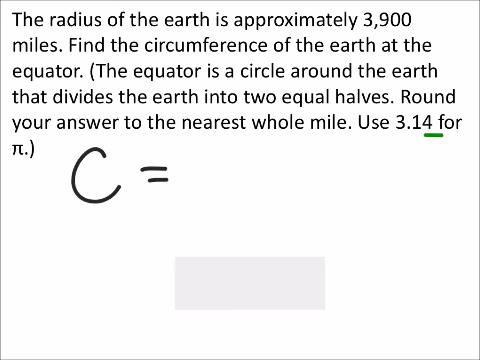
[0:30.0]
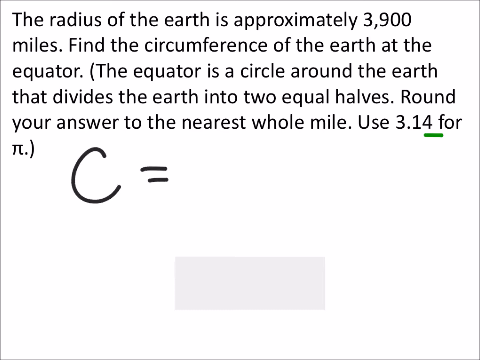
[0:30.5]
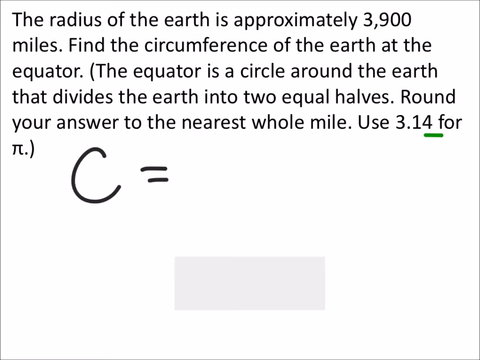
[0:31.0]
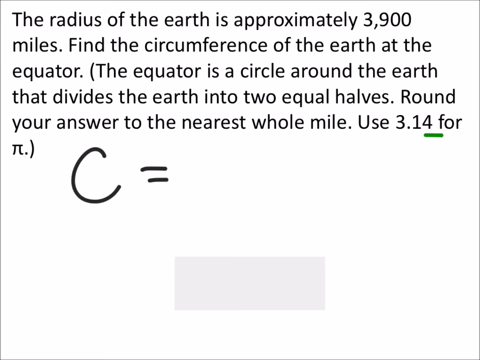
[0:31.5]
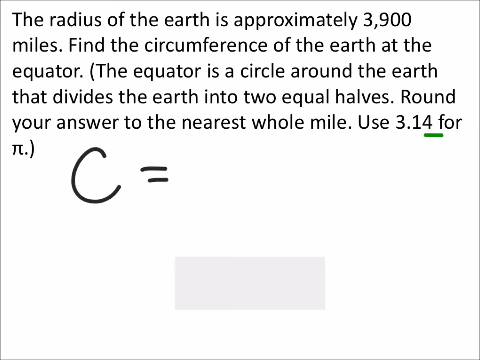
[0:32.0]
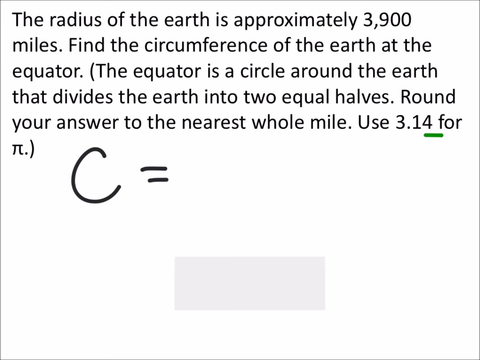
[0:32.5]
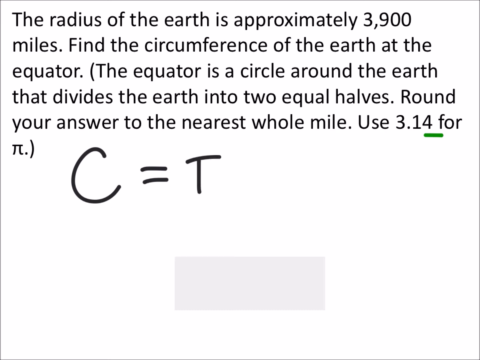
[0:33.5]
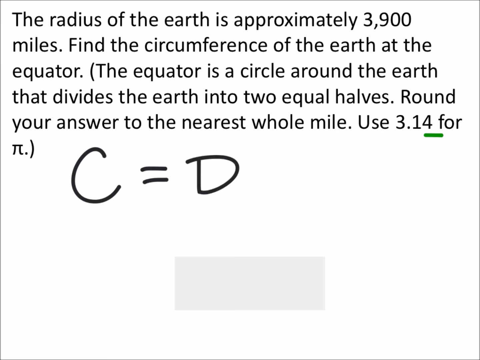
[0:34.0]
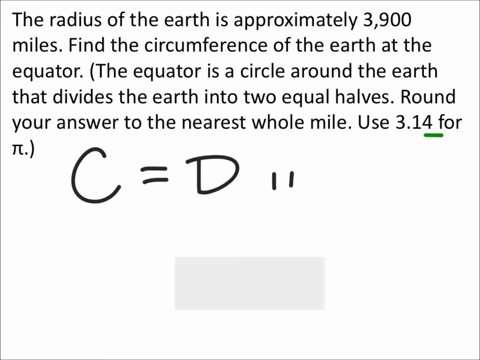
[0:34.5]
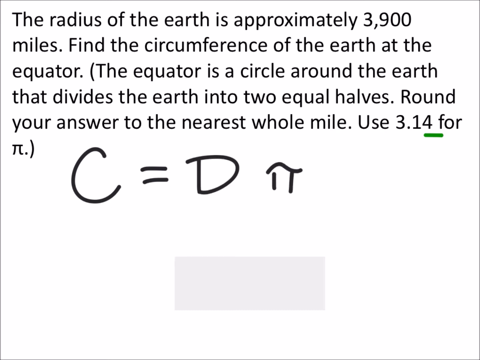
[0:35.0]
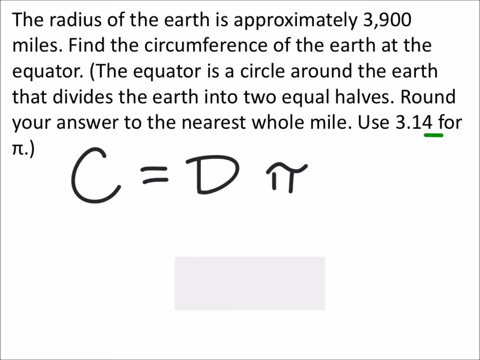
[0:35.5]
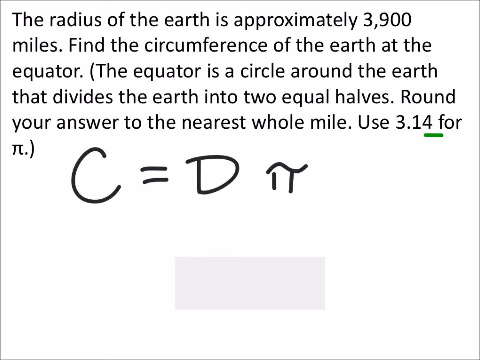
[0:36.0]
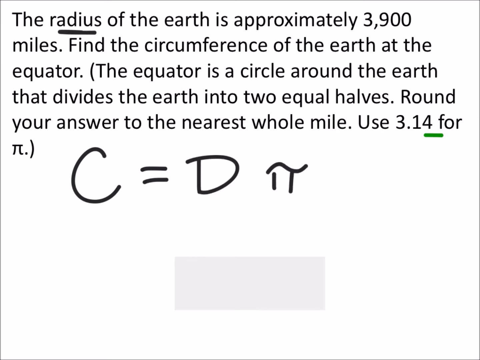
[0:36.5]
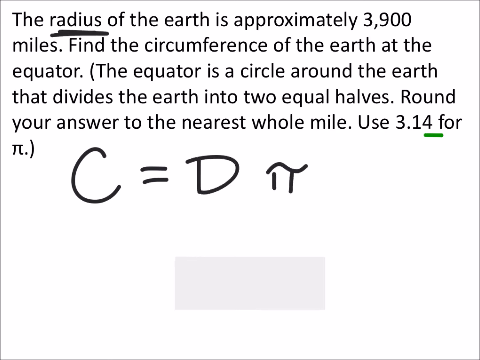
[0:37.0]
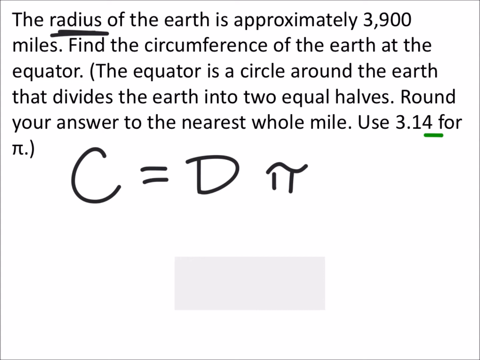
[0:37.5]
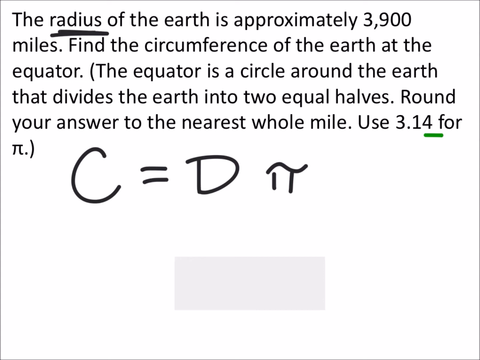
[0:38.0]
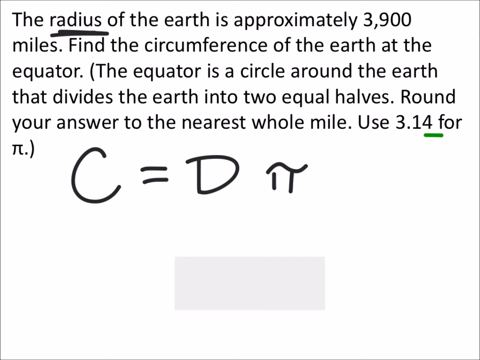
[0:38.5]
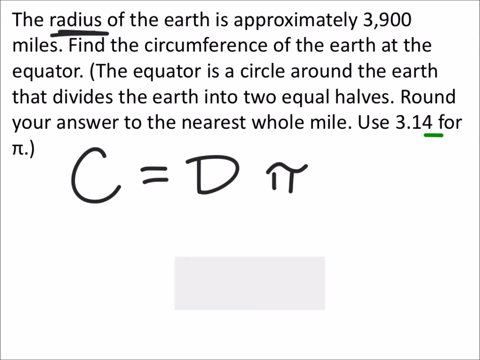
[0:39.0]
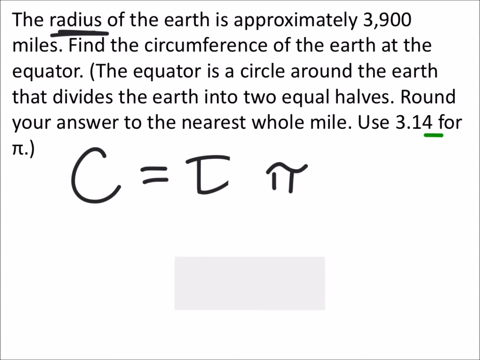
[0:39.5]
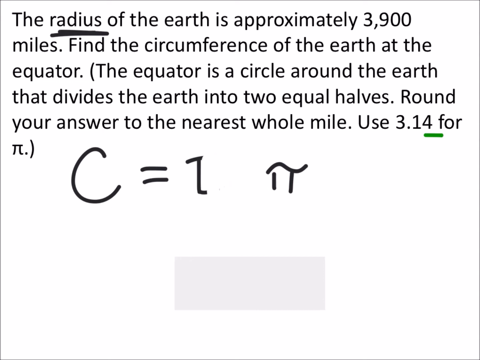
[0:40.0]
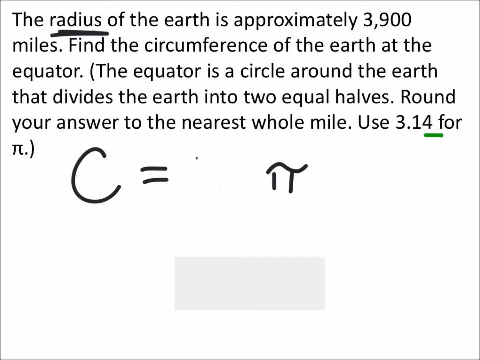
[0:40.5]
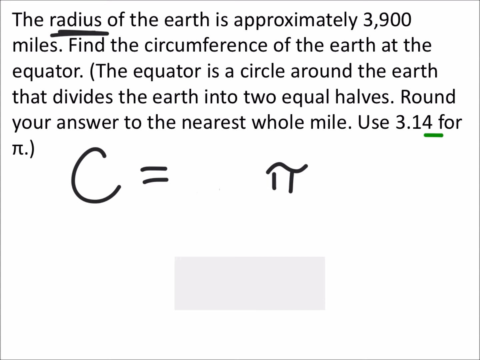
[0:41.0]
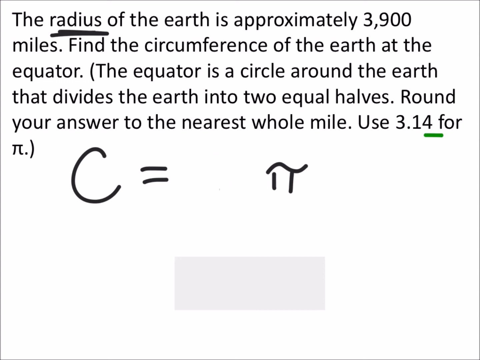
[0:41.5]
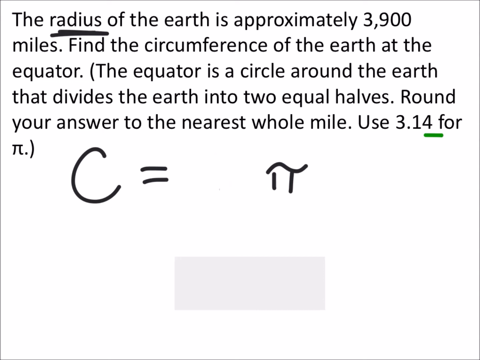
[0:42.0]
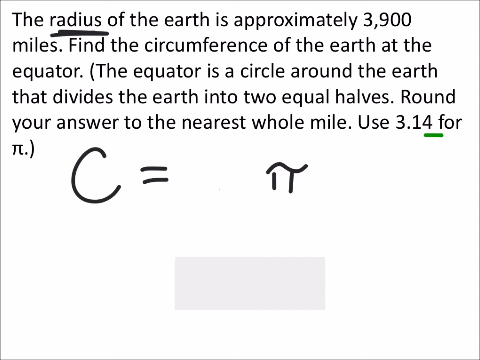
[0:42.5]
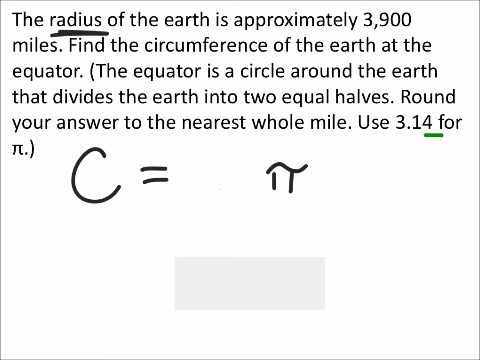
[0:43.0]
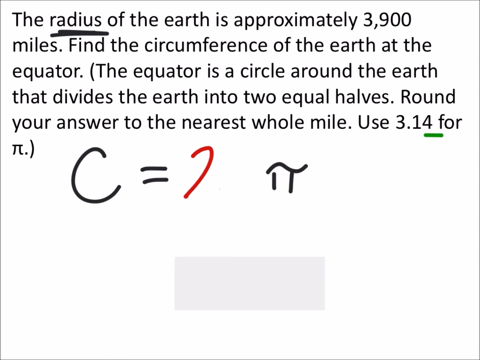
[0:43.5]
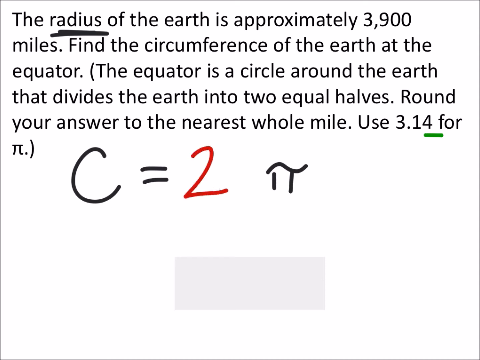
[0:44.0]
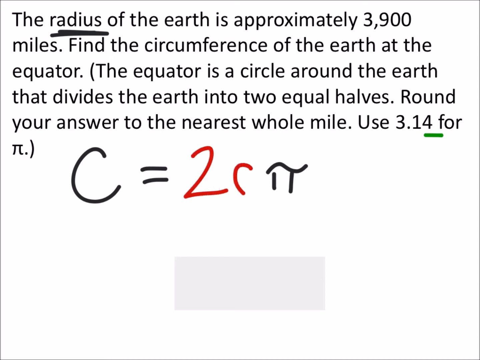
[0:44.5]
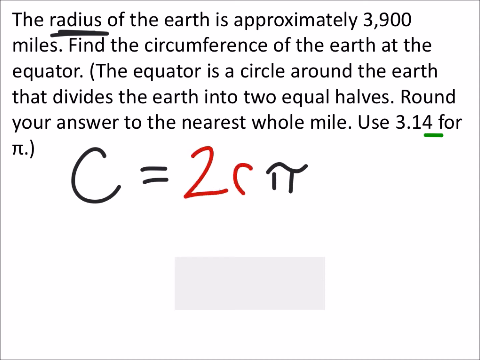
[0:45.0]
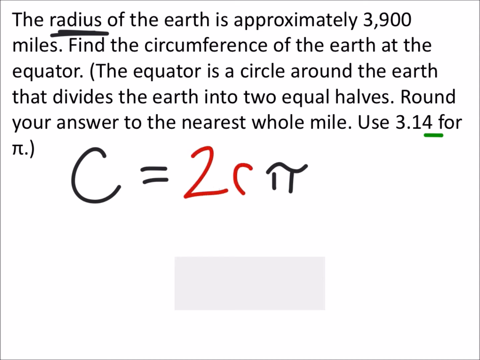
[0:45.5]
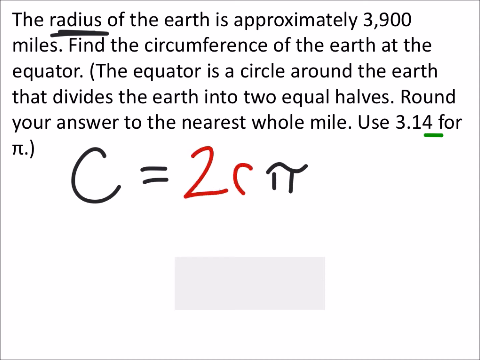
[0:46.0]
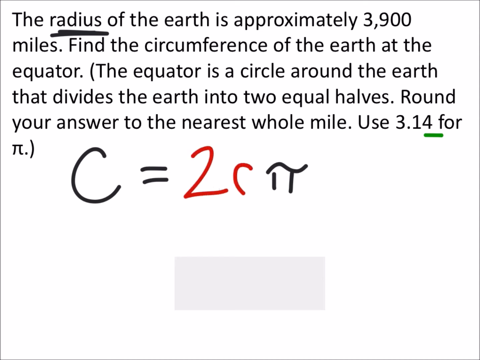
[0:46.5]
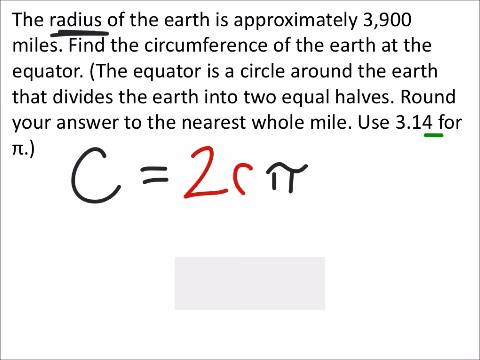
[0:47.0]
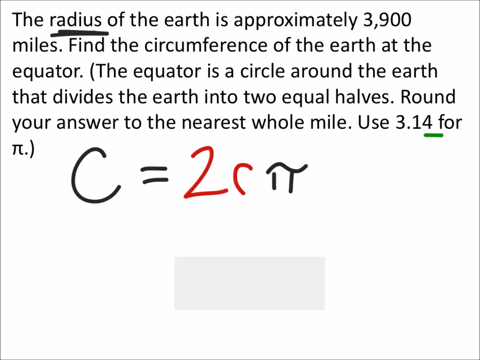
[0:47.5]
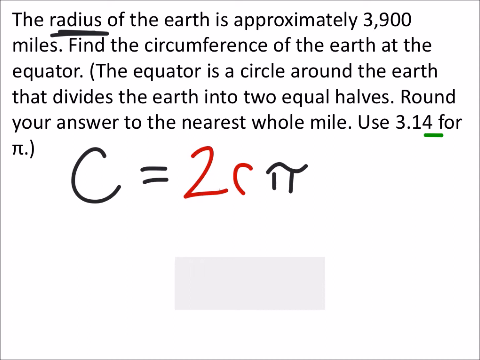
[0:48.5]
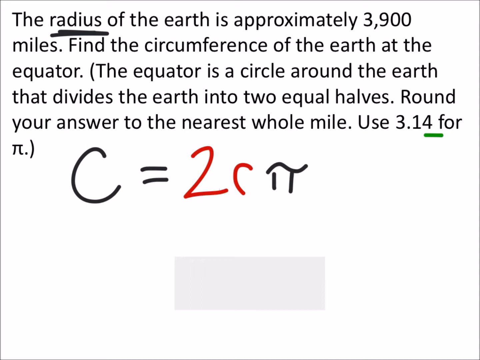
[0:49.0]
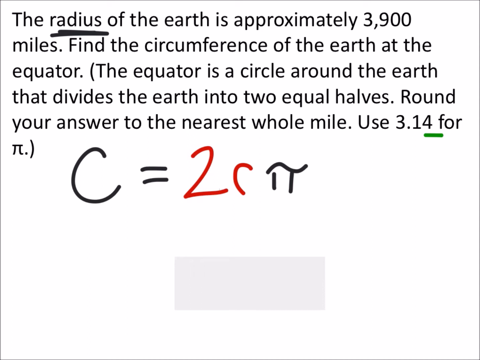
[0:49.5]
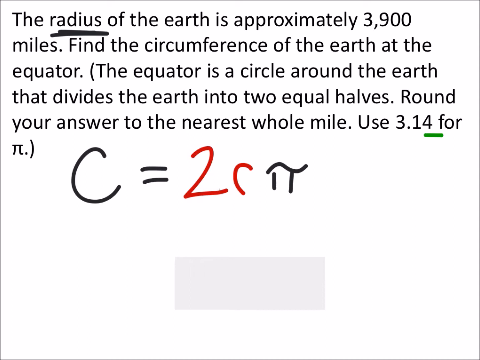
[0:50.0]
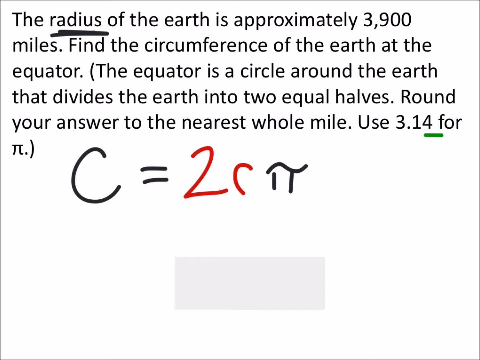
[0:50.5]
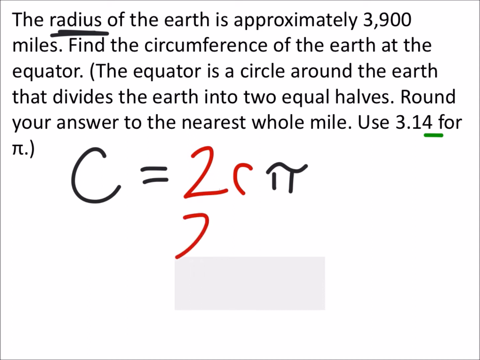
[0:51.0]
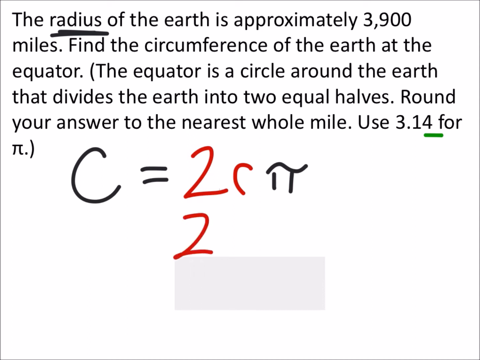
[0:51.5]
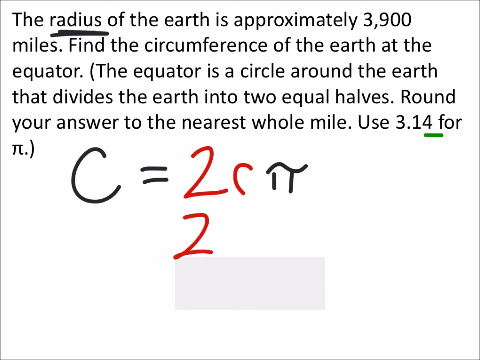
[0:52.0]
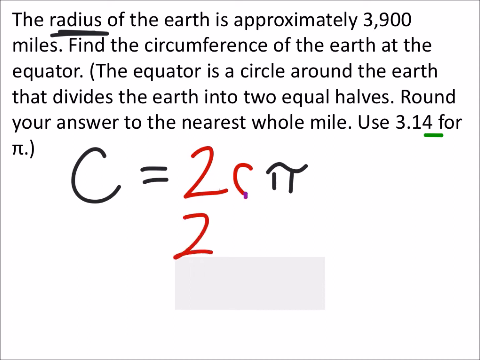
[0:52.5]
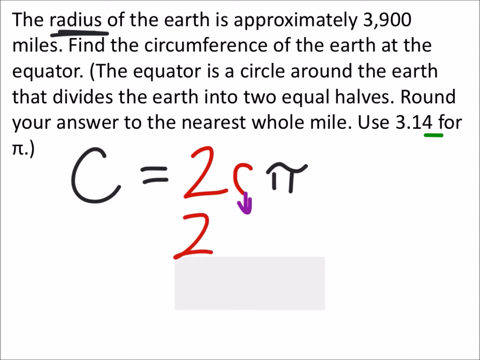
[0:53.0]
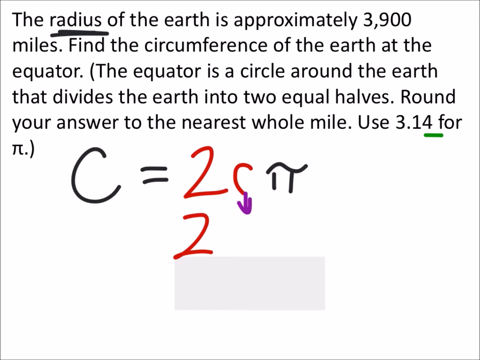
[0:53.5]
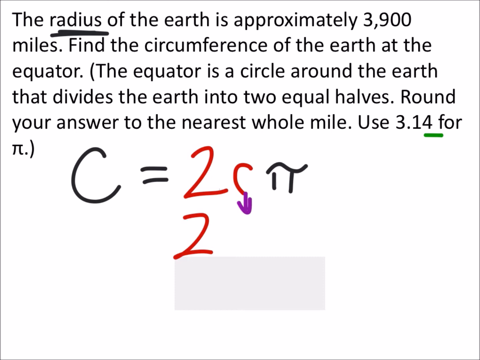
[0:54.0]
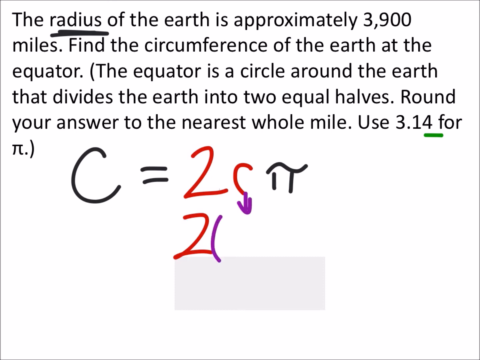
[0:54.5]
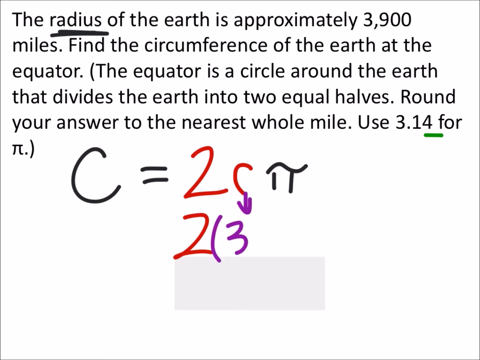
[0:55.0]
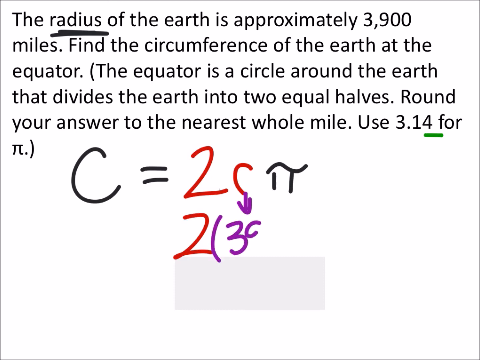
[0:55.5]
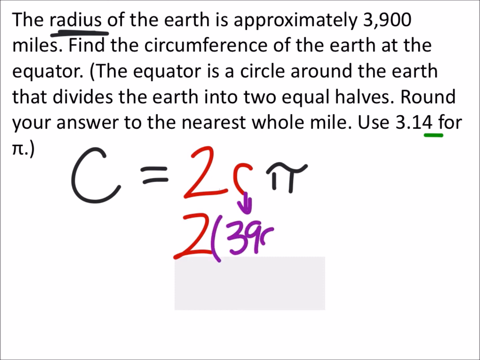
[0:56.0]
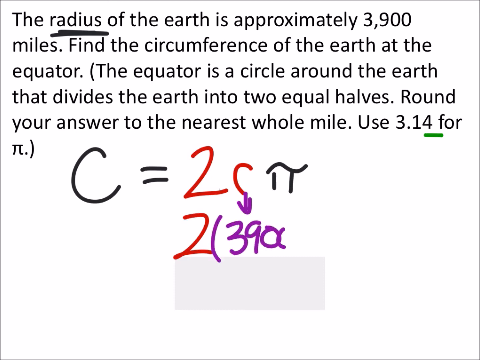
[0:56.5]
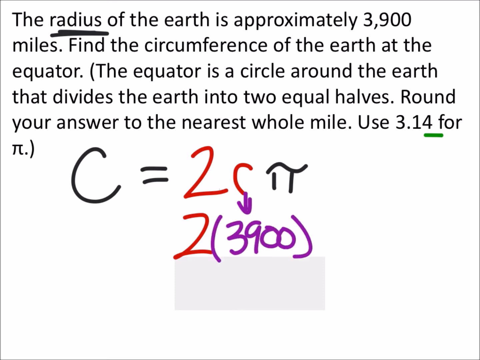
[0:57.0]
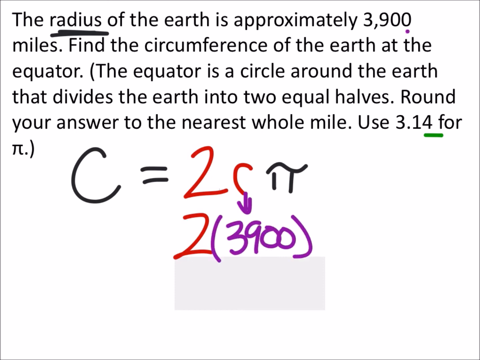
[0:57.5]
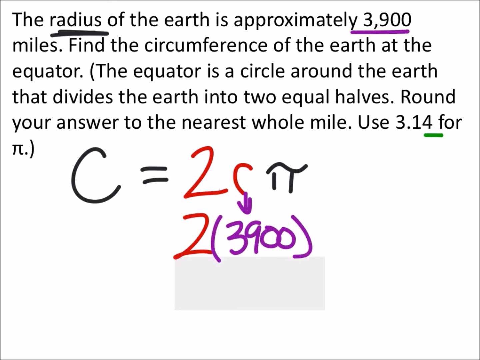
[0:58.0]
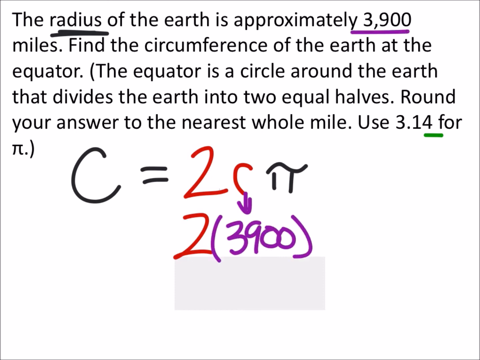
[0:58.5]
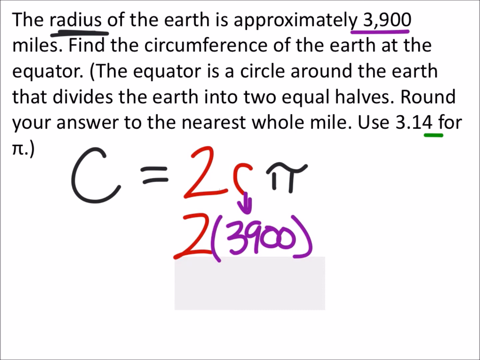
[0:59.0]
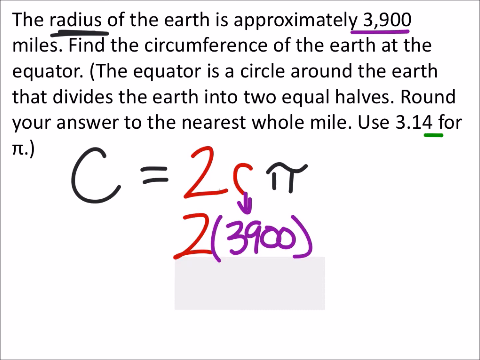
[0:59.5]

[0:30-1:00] Against a solid white background, apparently a class, perhaps for math or science, is being worked through by a student. The problem appears in black text starting from the top left corner: "The radius of the Earth is approximately 3,900 miles. Find the circumference of the Earth at the equator. The equator is a circle around the Earth that divides the Earth into two equal halves. Round your answer to the nearest whole mile. Use 3.14 for pi." "C =" is written out in handwriting, with a capital C and the equal sign in black. The next part is written out as D pi, with the pi symbol, and then 2C is handwritten before the pi, using a pad of some sort or a mouse; how it is being written is not evident. 3,900 then appears in parentheses in purple.